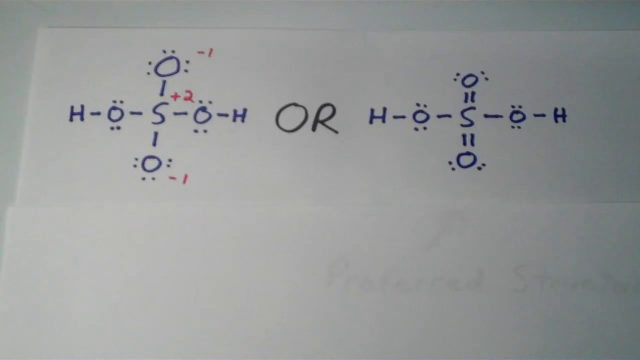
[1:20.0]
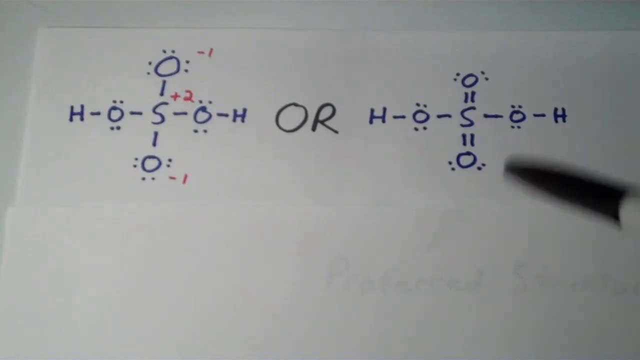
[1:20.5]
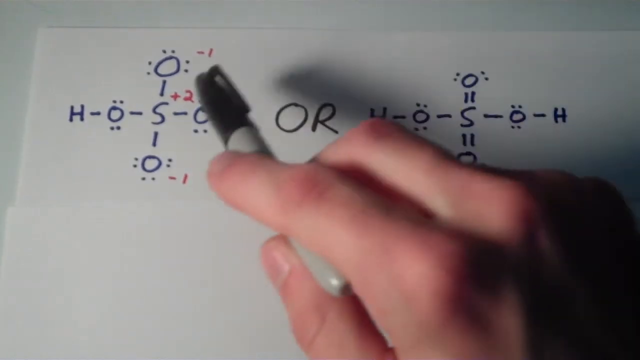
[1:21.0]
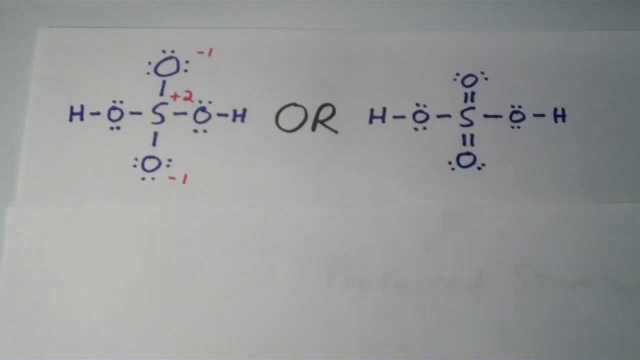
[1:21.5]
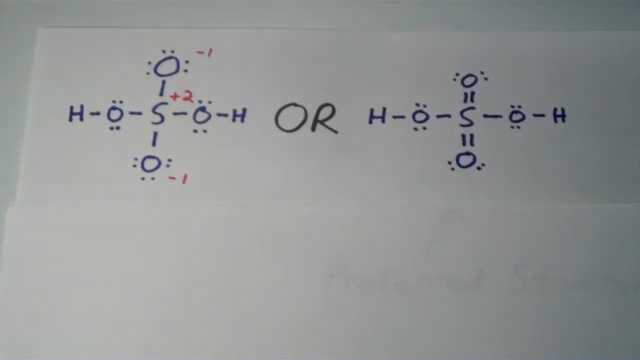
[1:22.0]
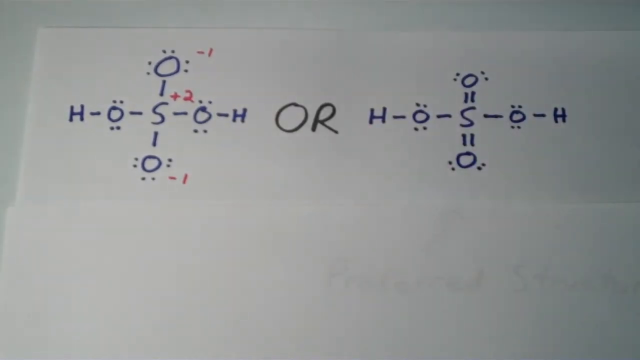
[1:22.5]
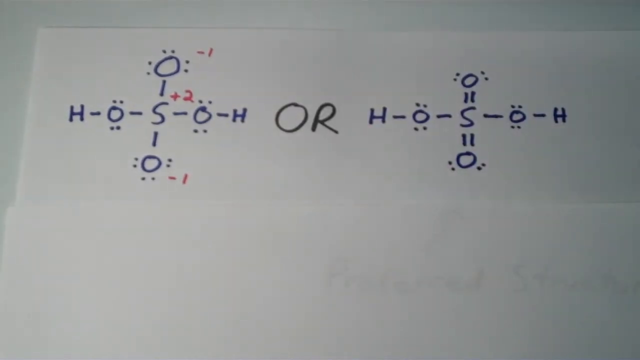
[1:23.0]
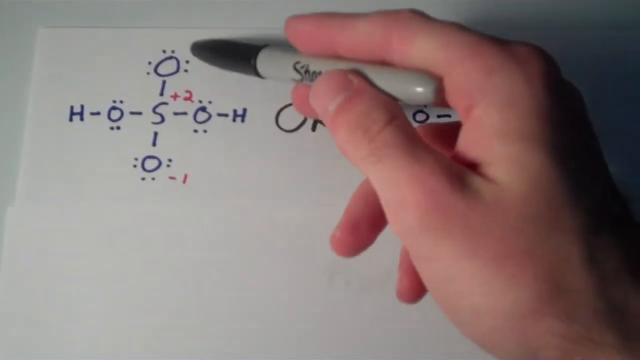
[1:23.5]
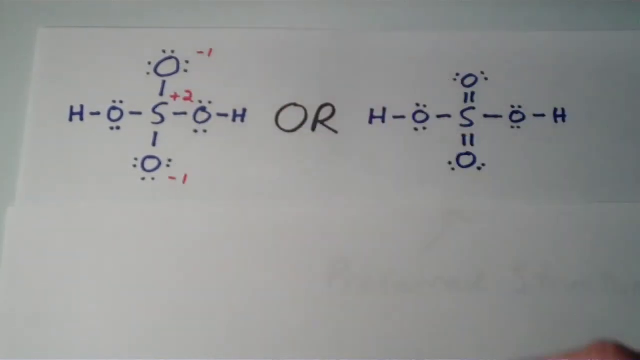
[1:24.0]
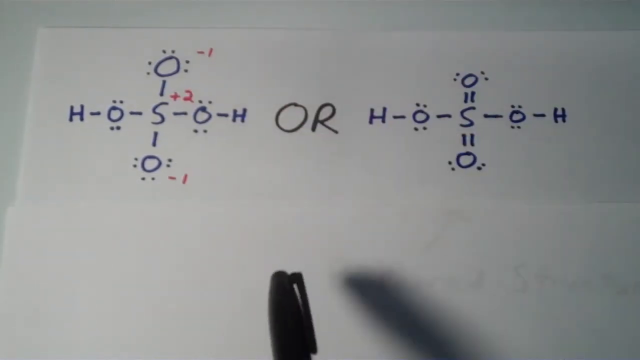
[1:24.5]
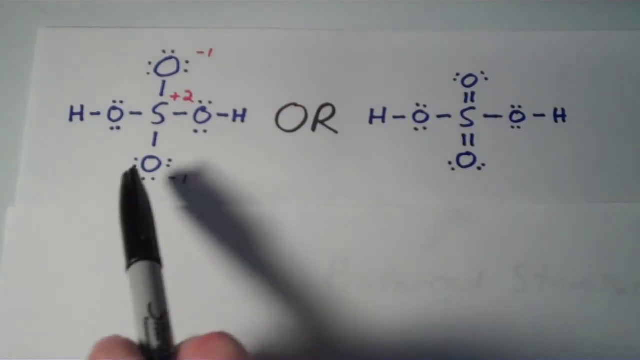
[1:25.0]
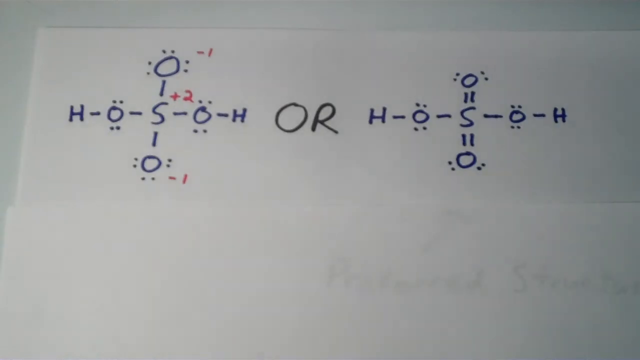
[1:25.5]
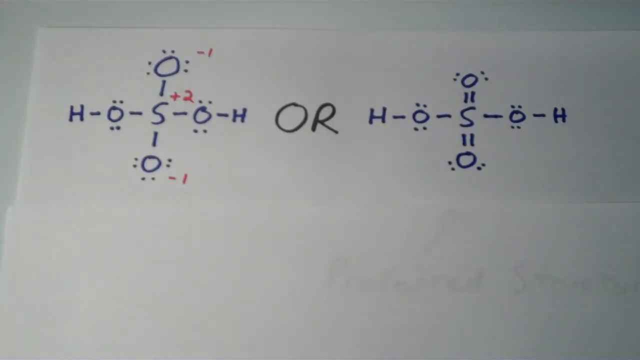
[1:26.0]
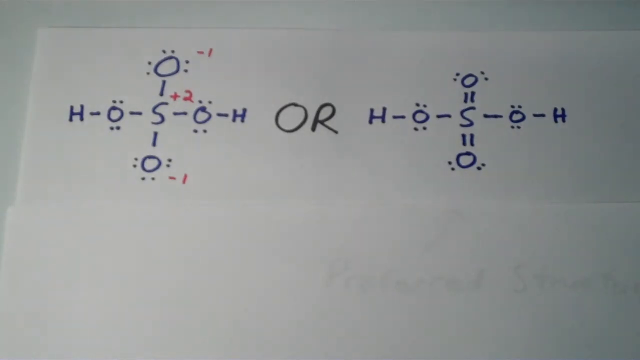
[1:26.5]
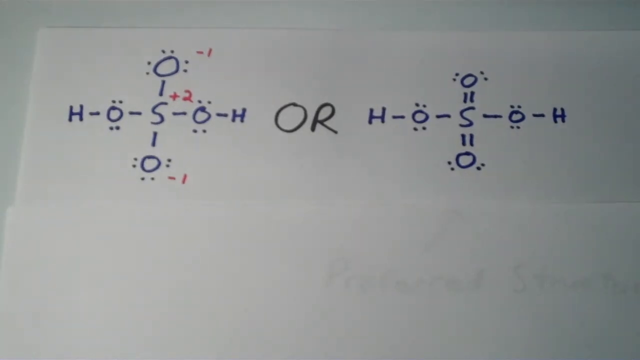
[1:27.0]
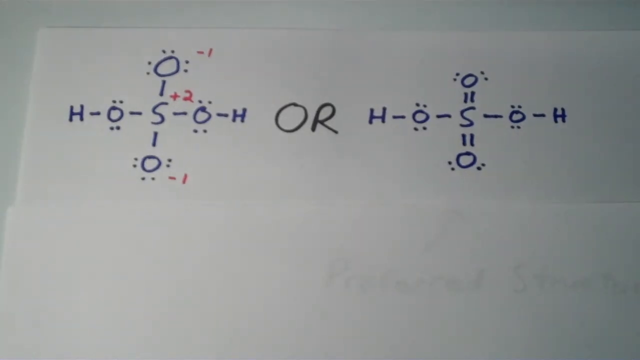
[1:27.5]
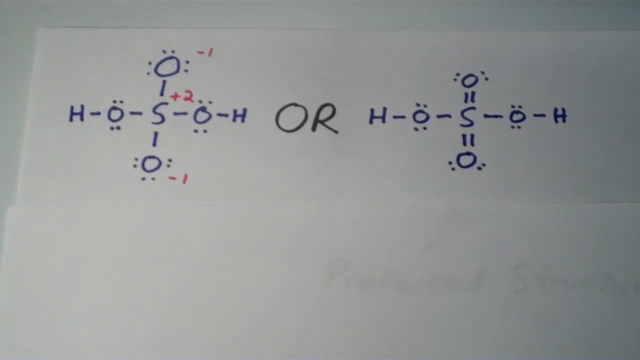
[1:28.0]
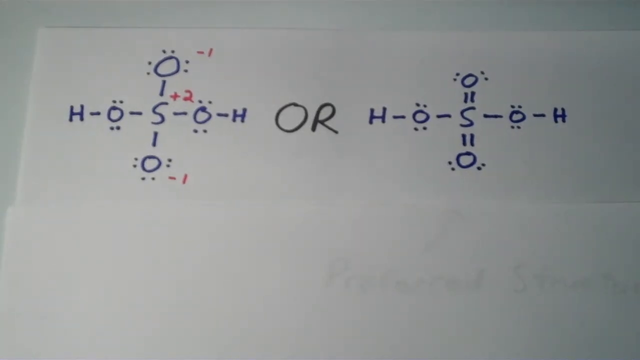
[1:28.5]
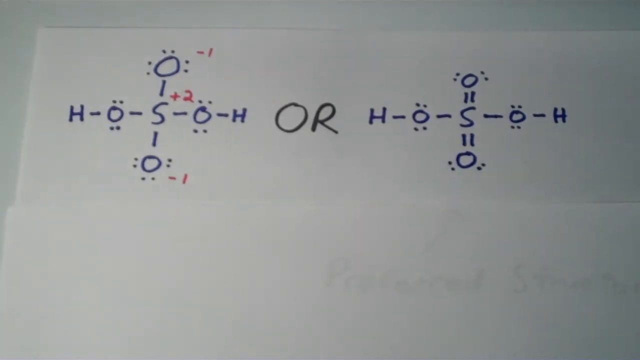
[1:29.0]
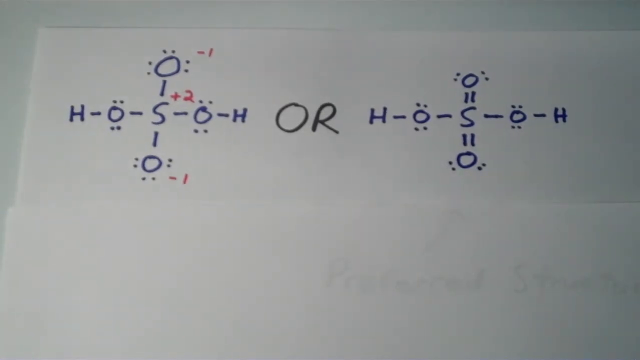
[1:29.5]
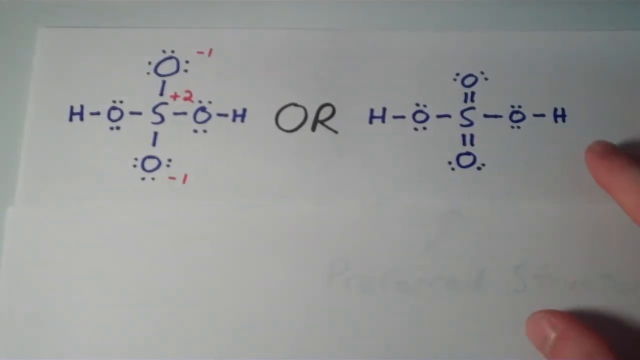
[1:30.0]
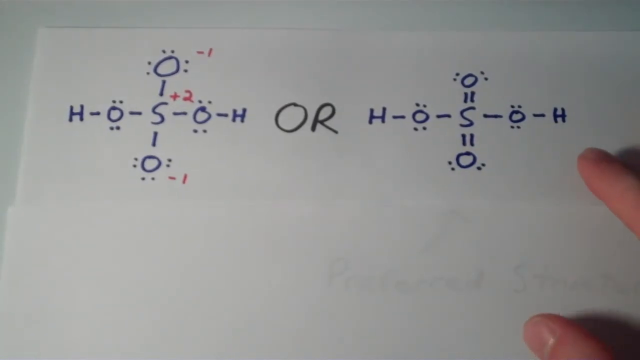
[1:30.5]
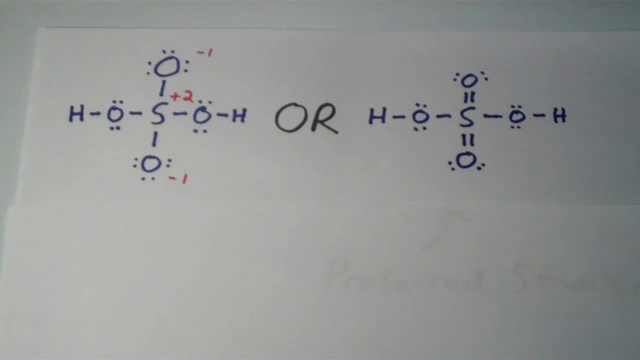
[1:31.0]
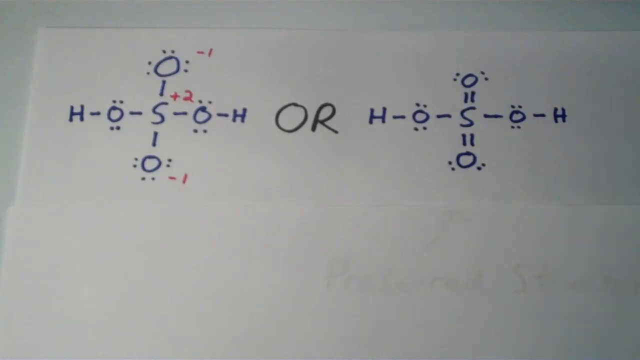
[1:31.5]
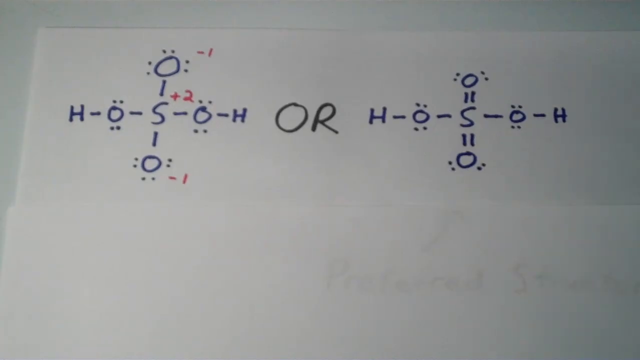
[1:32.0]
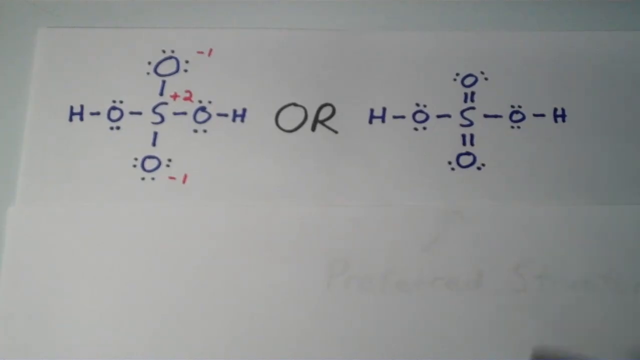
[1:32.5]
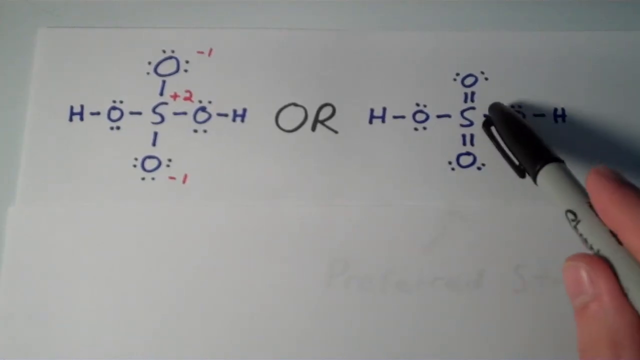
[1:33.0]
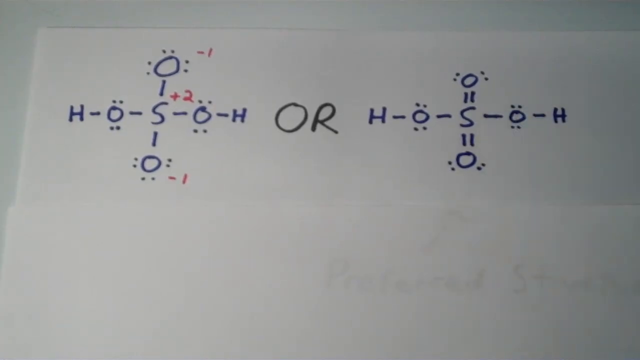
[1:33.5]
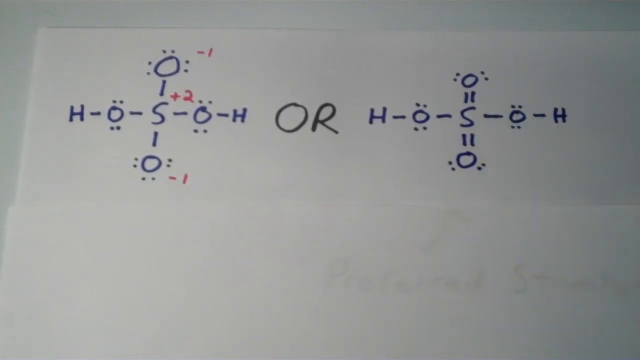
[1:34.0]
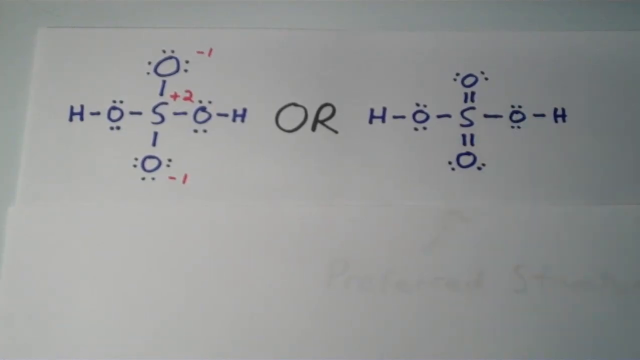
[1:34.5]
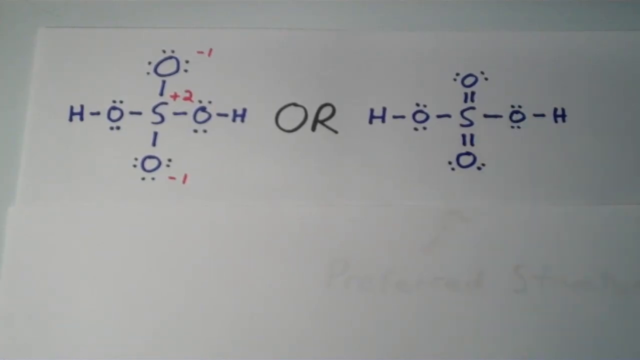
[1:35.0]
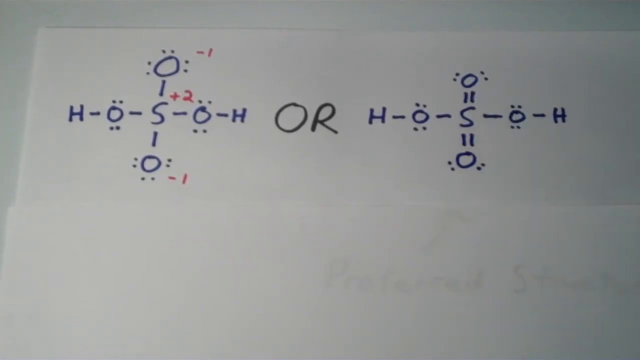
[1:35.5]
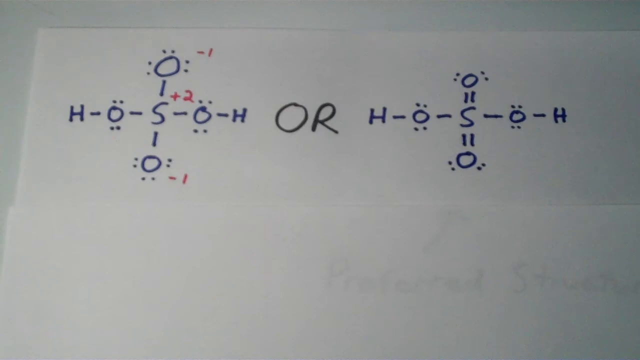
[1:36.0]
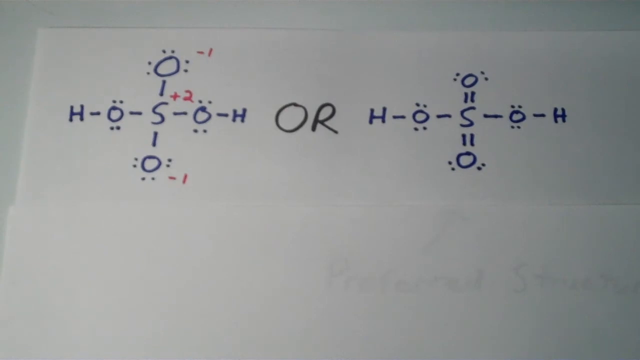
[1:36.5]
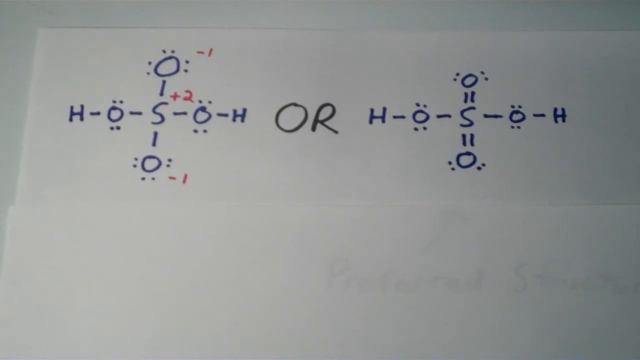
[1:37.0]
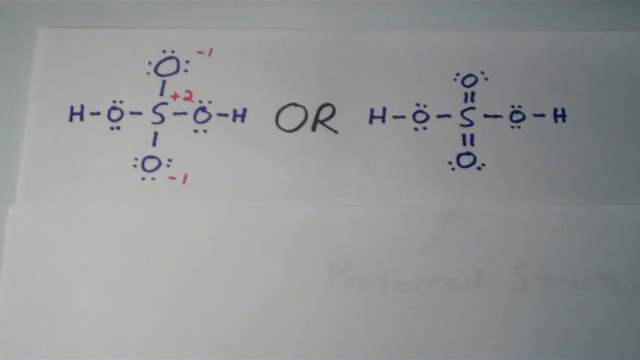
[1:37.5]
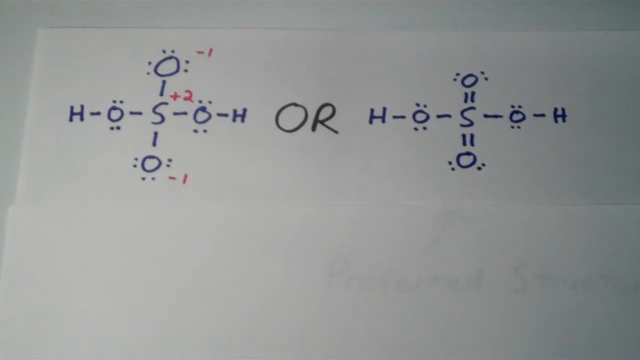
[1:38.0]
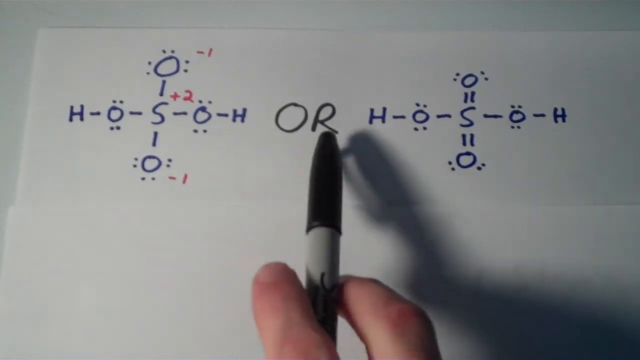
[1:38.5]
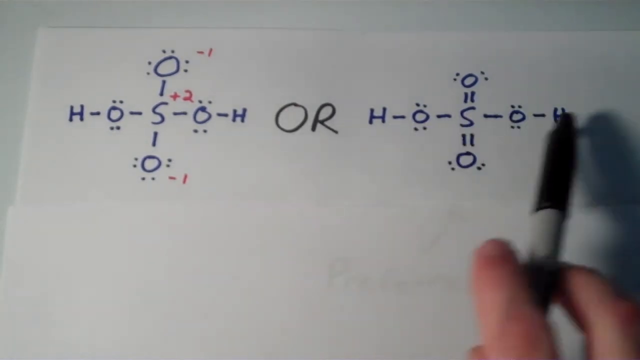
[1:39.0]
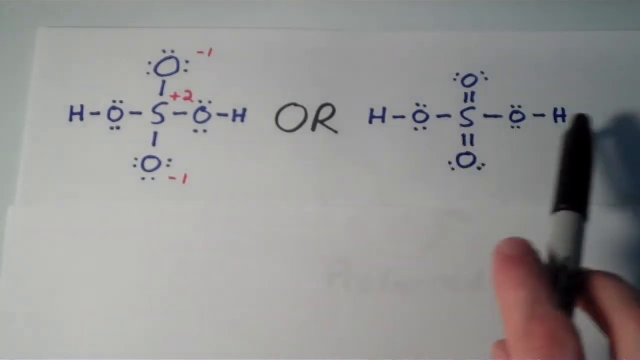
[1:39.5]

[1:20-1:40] The instructor goes over the left Lewis structure two to three times by pointing the marker cap at it, then points two or three times at the right structure, the one with double bonds, and moves the pen cap back and forth over the whole structure repeatedly. The instructor then does the same on the left side, pointing at the top oxygen atom, then the bottom oxygen atom, and then making a cross gesture over them.